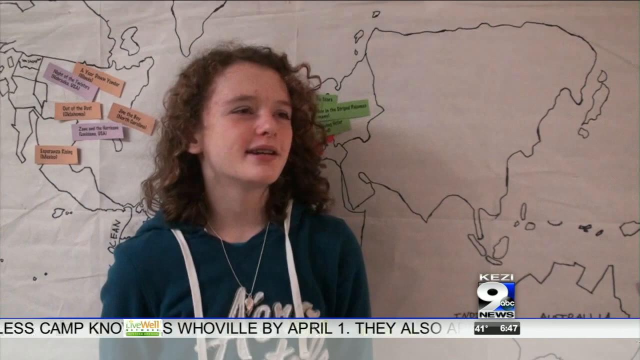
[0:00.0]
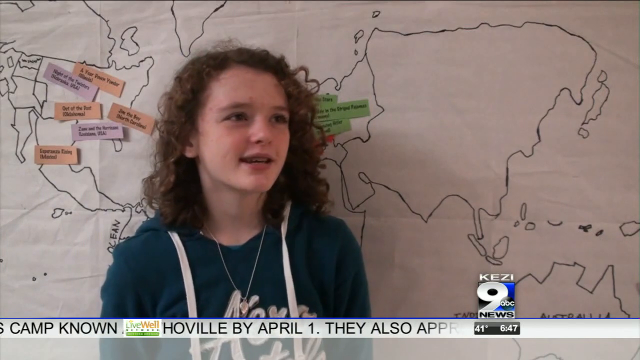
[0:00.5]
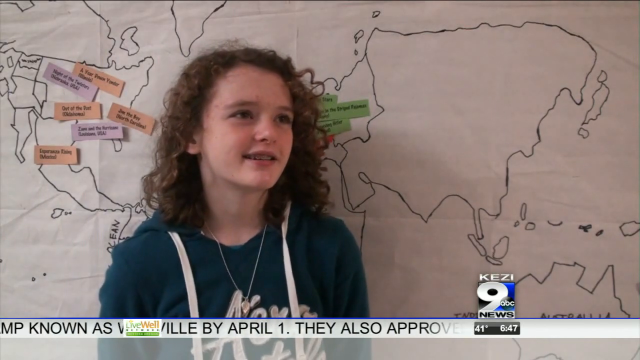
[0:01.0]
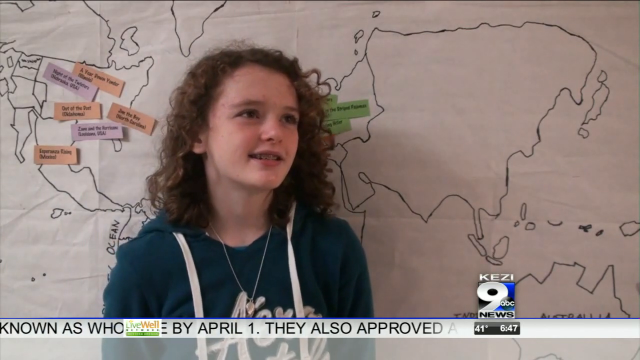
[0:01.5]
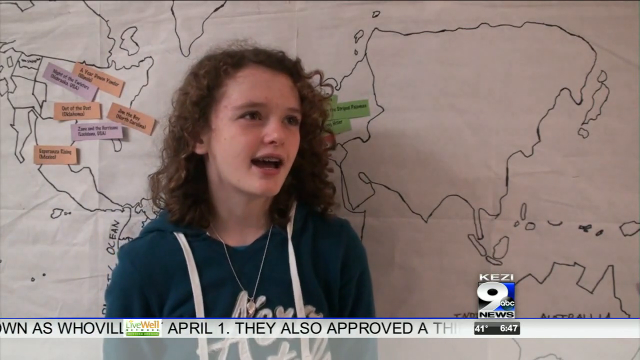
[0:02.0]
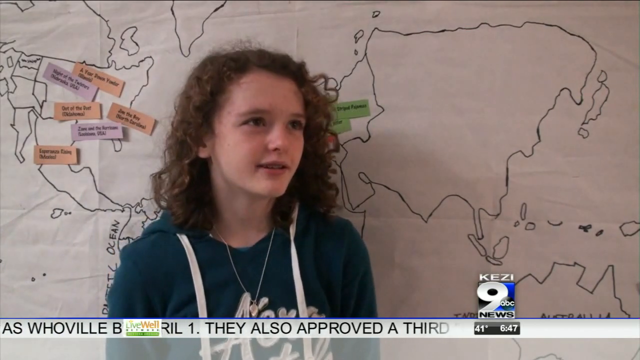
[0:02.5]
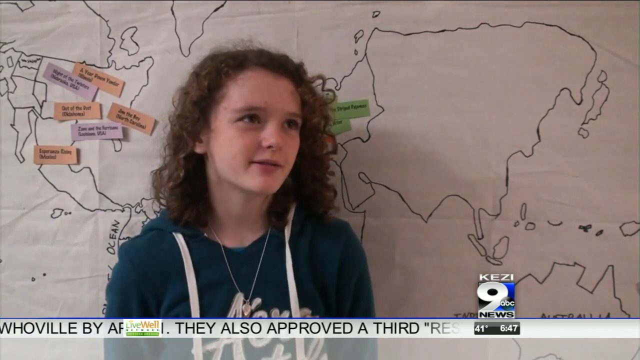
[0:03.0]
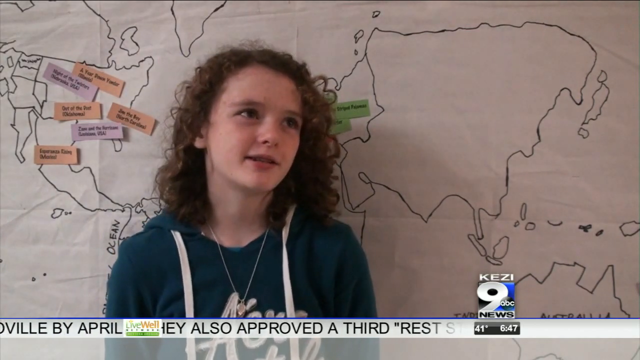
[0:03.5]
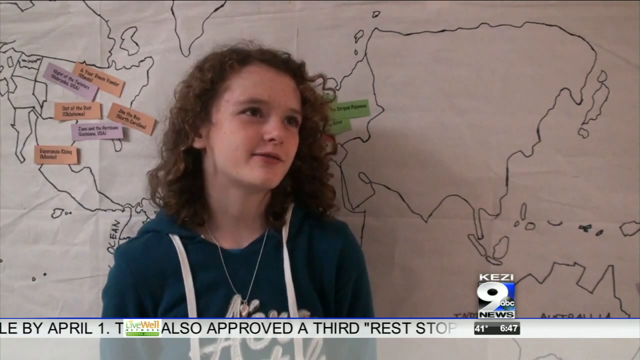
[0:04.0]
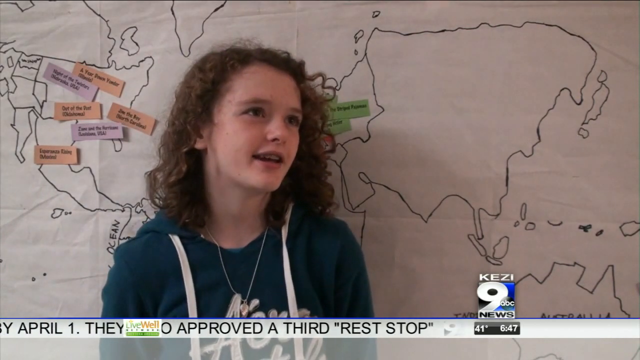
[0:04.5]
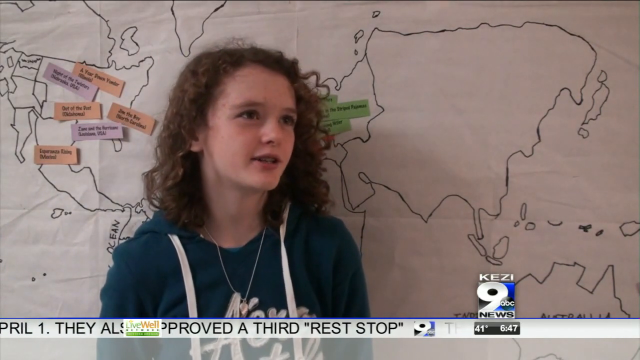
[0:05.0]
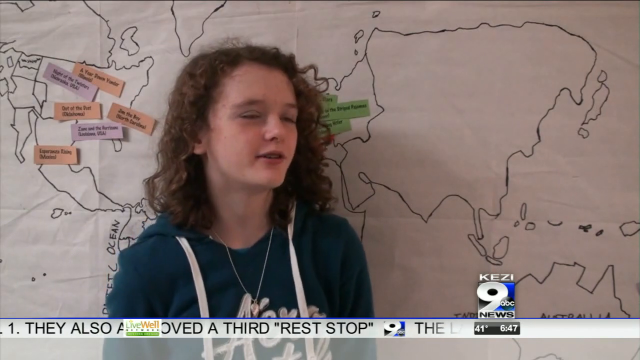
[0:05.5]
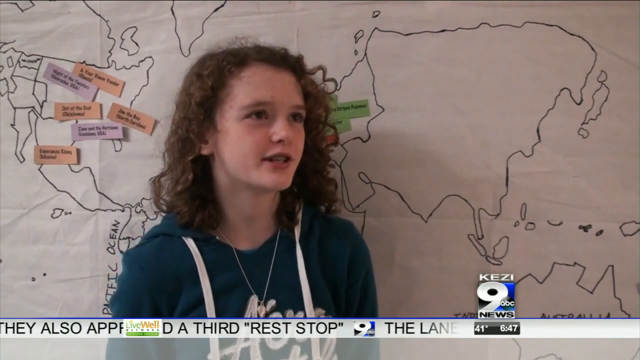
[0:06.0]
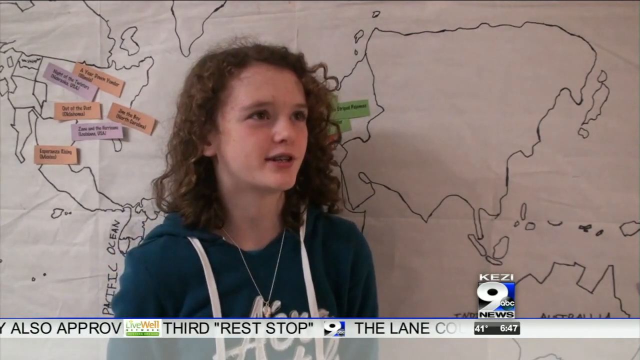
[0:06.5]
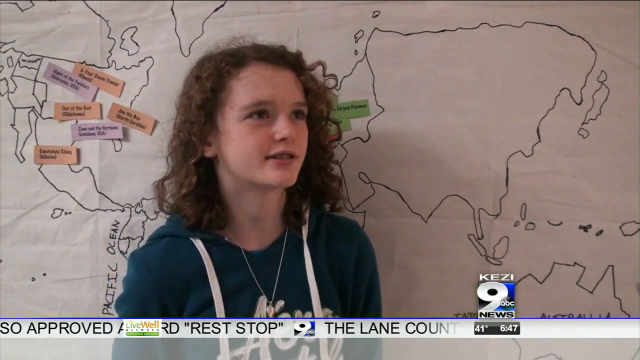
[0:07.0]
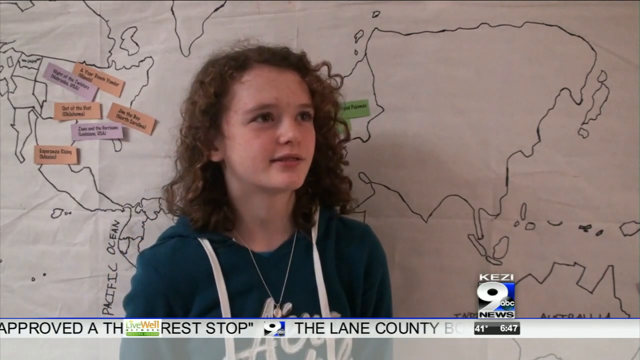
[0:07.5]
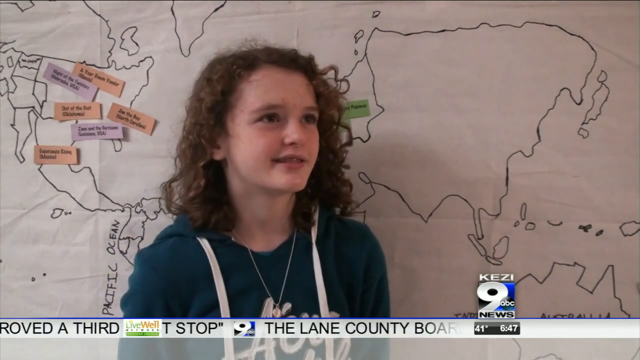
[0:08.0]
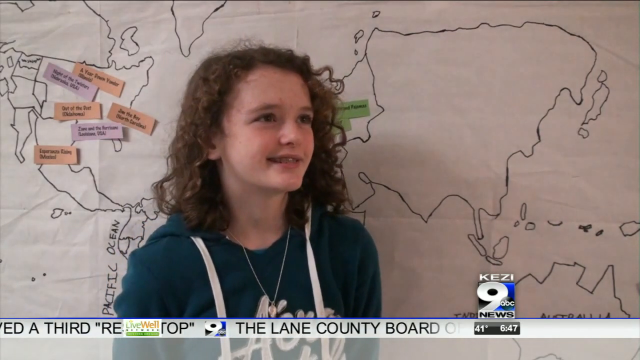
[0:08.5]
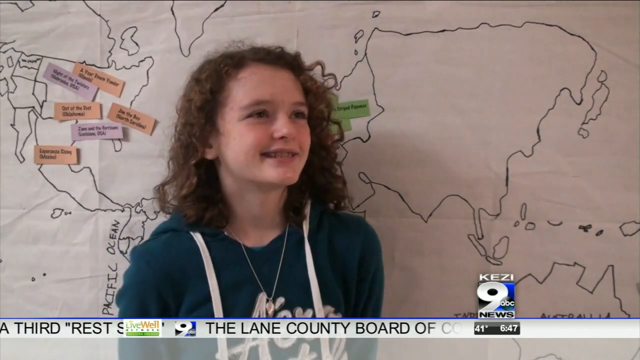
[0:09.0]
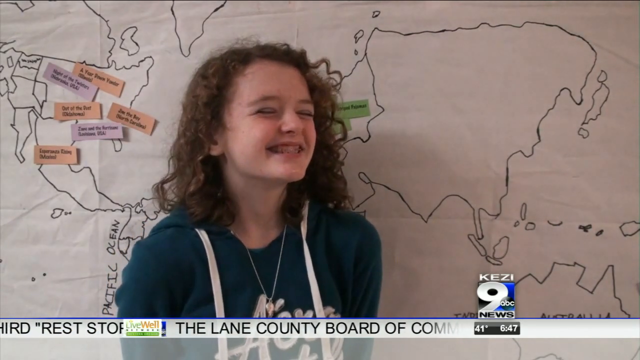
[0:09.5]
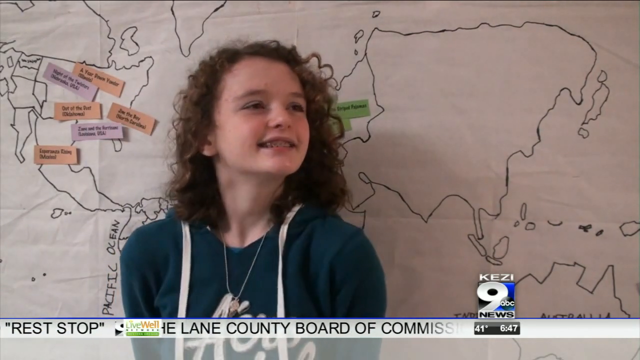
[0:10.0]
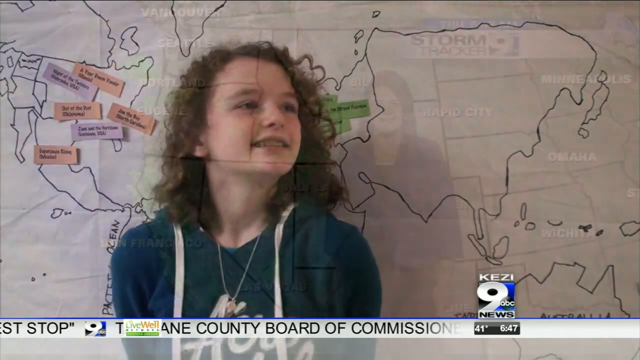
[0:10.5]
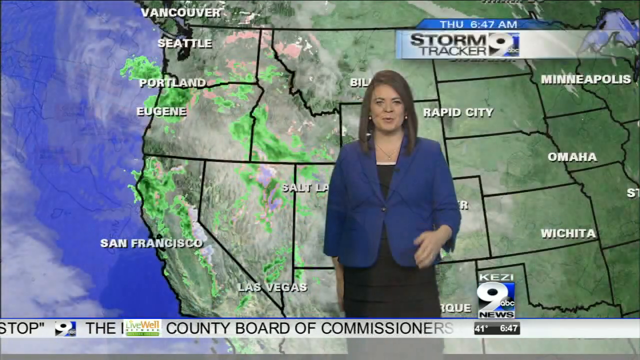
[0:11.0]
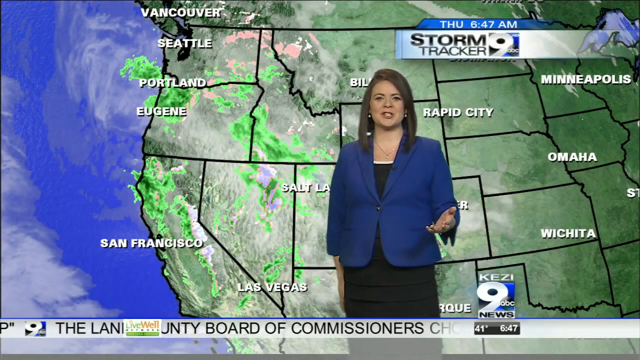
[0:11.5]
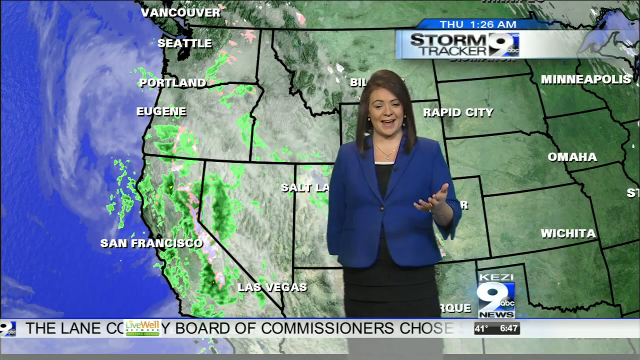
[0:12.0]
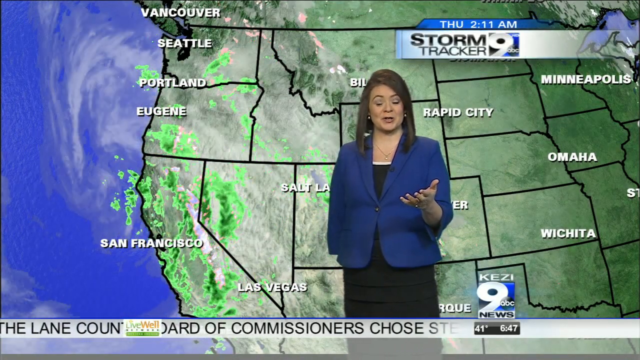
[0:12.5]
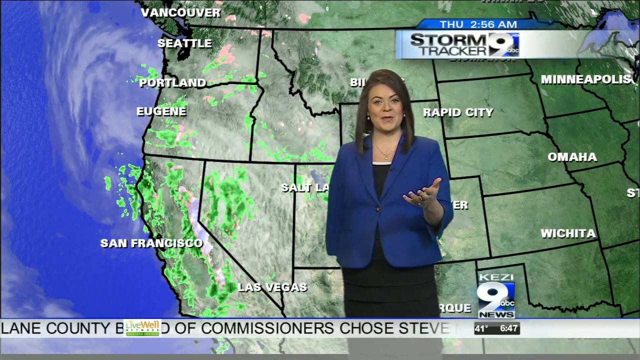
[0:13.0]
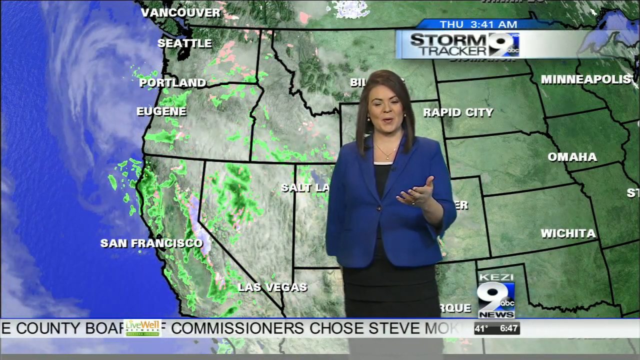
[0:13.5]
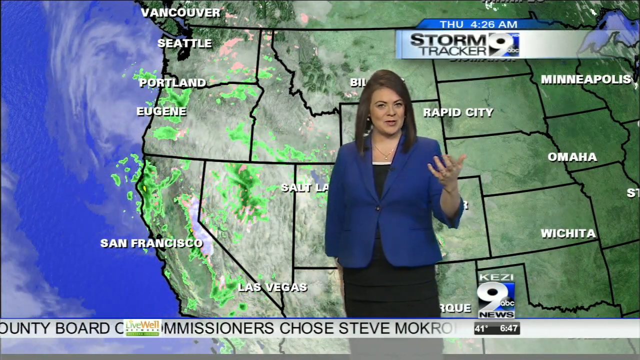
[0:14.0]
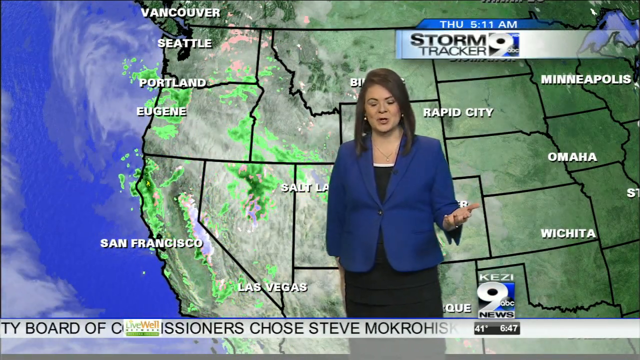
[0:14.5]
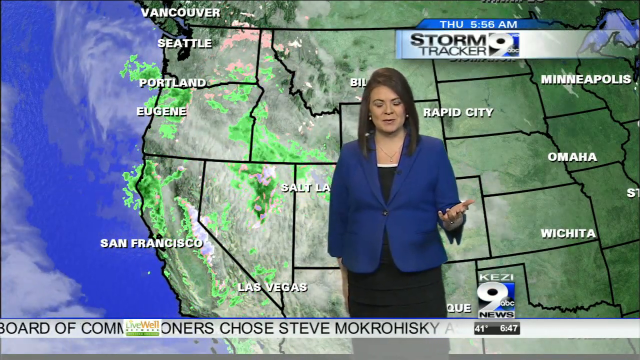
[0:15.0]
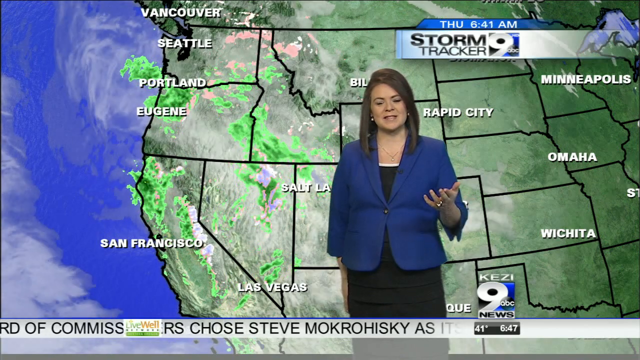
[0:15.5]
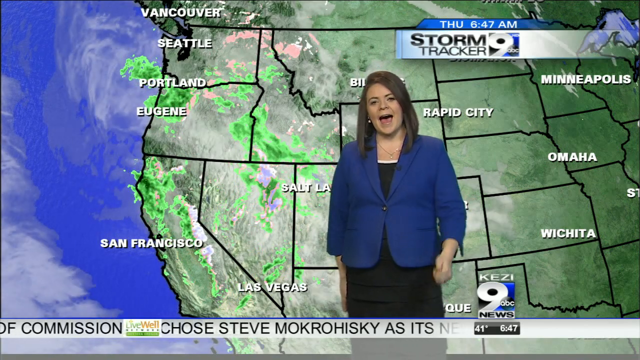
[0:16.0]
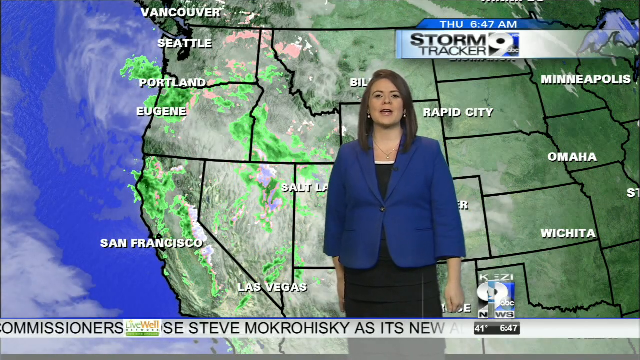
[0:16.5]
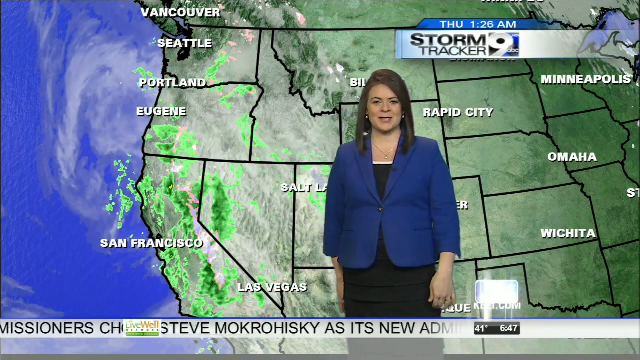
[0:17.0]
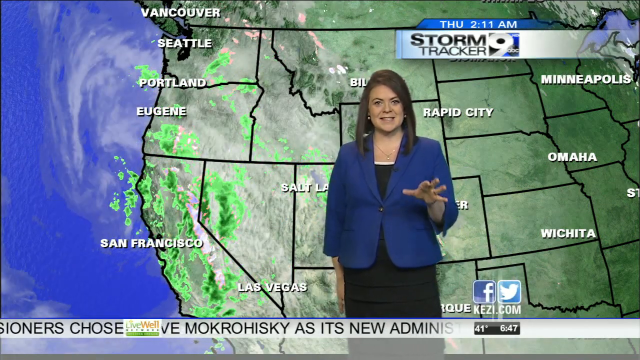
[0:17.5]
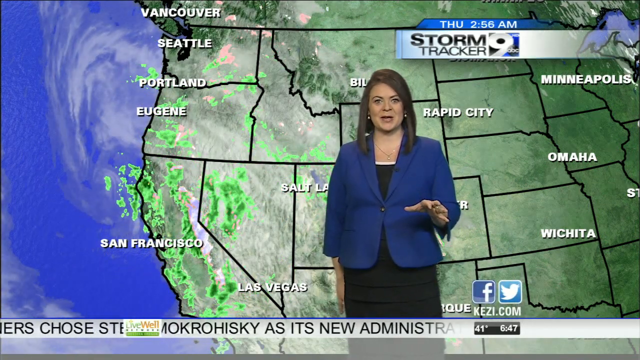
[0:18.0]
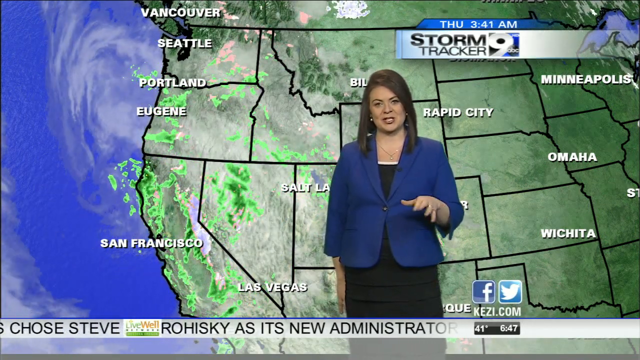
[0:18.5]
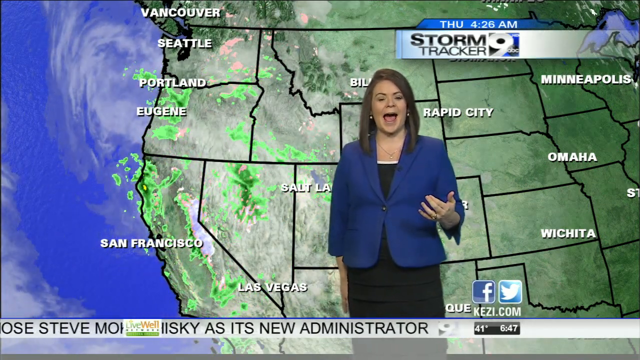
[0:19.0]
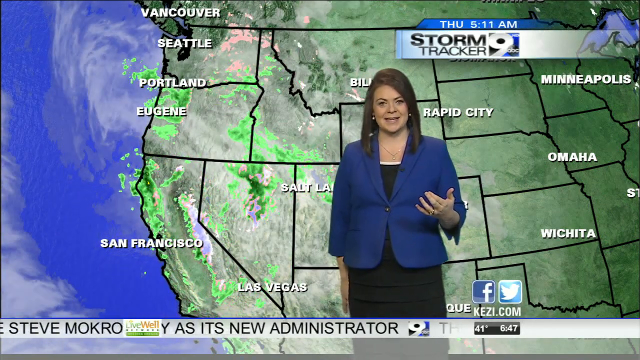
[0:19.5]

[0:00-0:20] The video comes from a news station, with a logo reading "9 ABC News" in the bottom right-hand corner. It features a young girl in school. She wears a kind of teal-colored sweatshirt with white drawstrings hanging from the hood, and she has brown curly hair. She talks while standing in front of what looks like a map background made of white paper, and she seems pretty excited and very happy in the interview. The video then cuts to a meteorologist in a studio, talking in front of a map of the United States with weather going across it. Several large cities are featured prominently on the map, including San Francisco, Salt Lake, Las Vegas, Portland and Eugene, which suggests this may be a news affiliate that focuses more on the west coast. The meteorologist wears a blue suit jacket top over a black dress and has kind of shoulder-length dark brown hair.